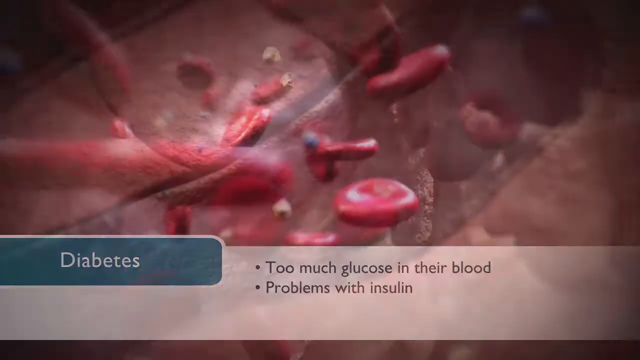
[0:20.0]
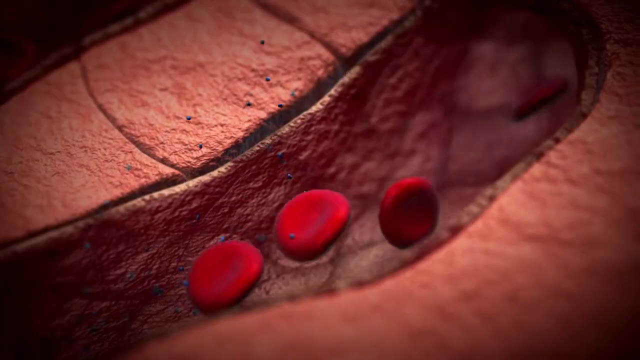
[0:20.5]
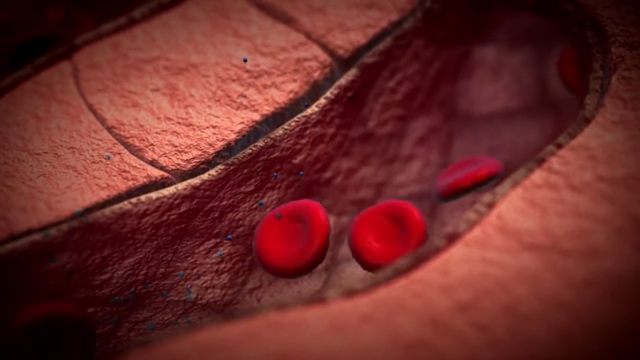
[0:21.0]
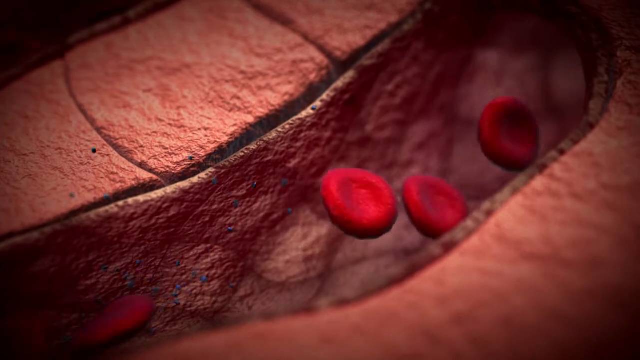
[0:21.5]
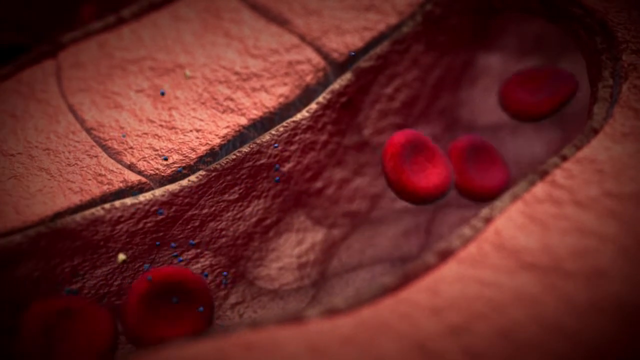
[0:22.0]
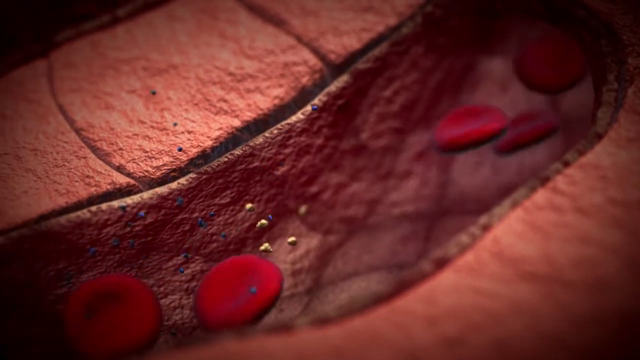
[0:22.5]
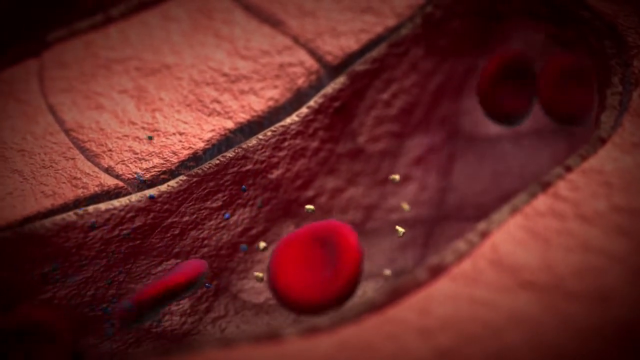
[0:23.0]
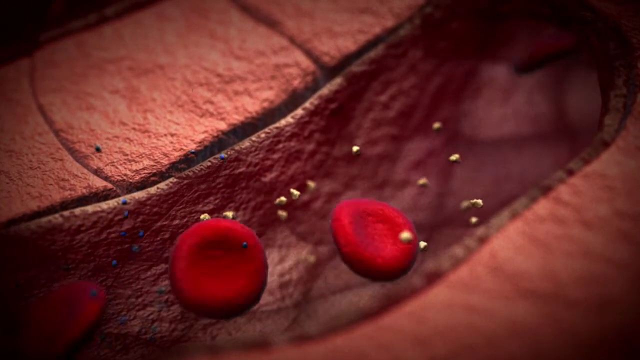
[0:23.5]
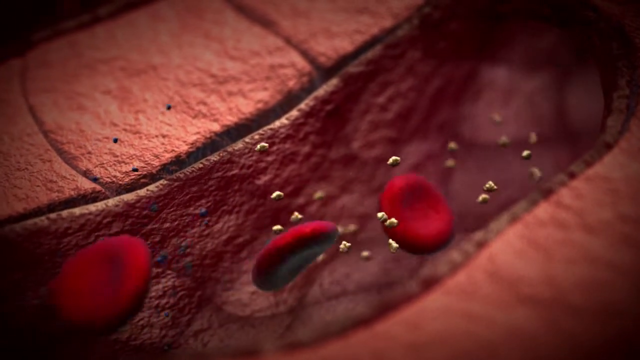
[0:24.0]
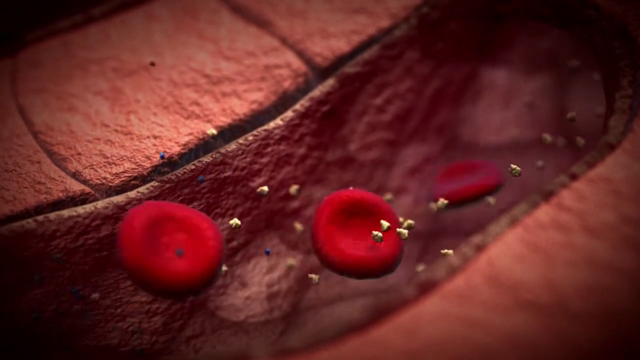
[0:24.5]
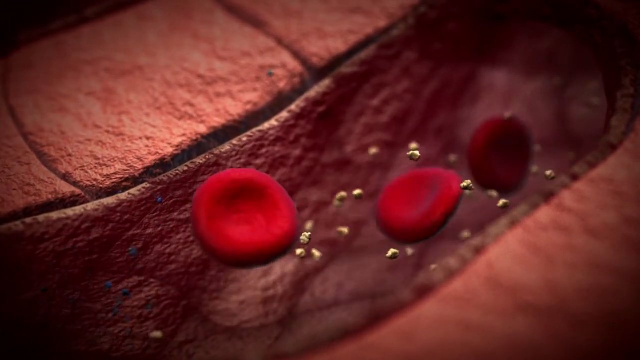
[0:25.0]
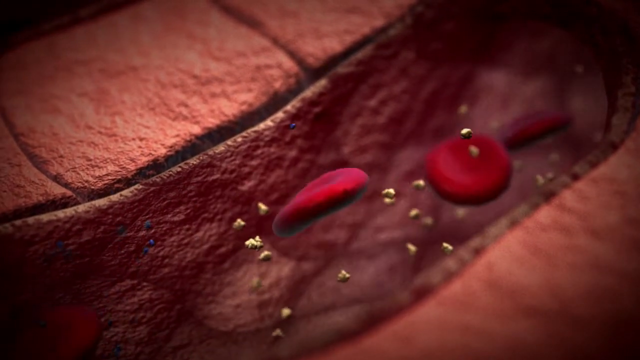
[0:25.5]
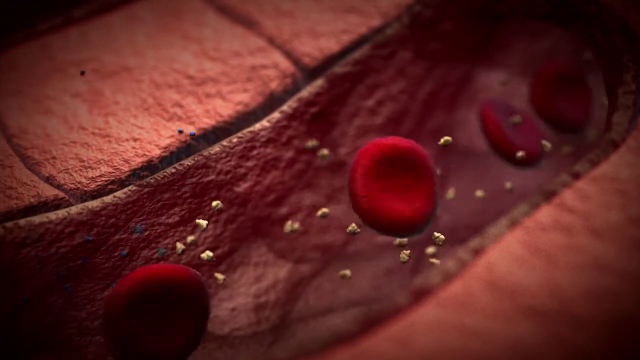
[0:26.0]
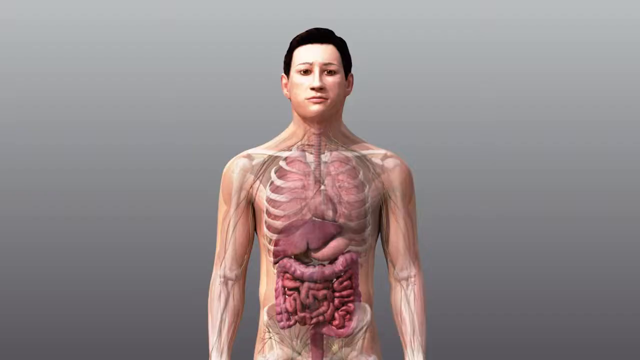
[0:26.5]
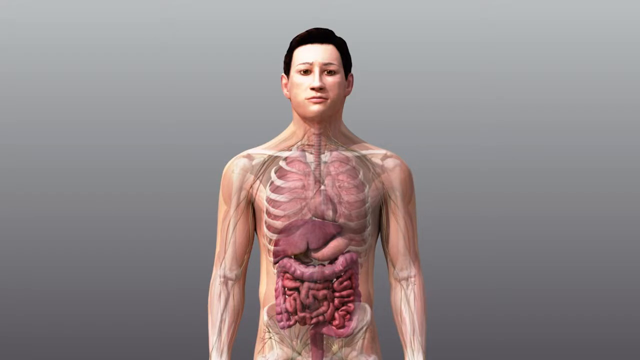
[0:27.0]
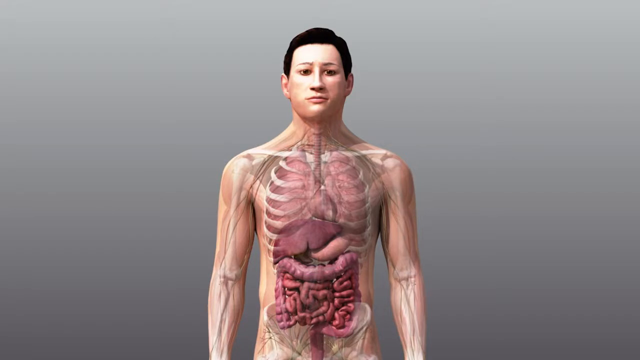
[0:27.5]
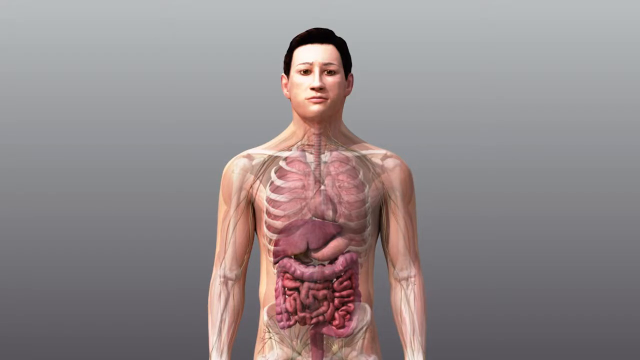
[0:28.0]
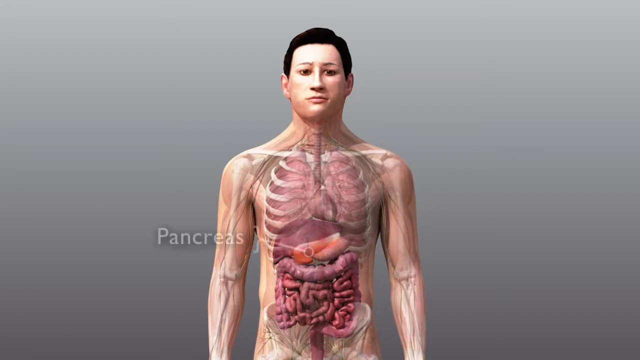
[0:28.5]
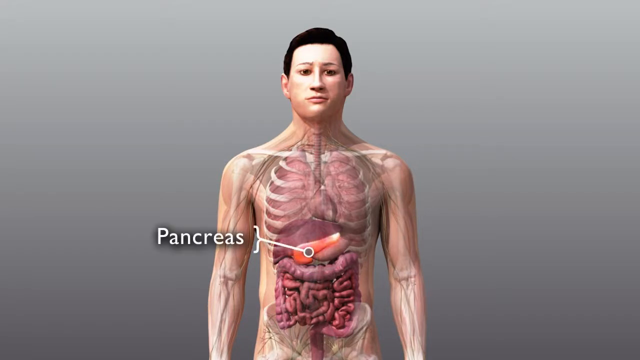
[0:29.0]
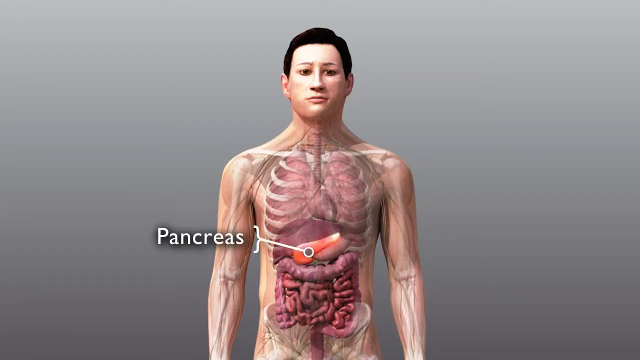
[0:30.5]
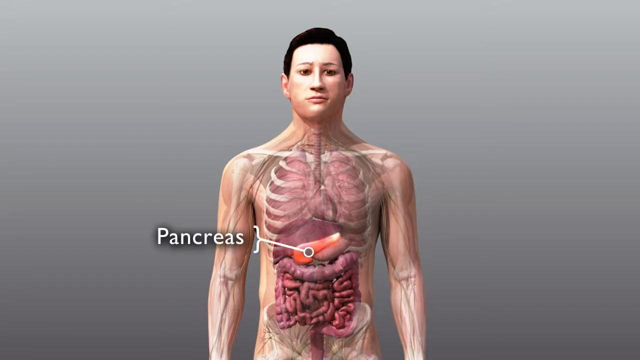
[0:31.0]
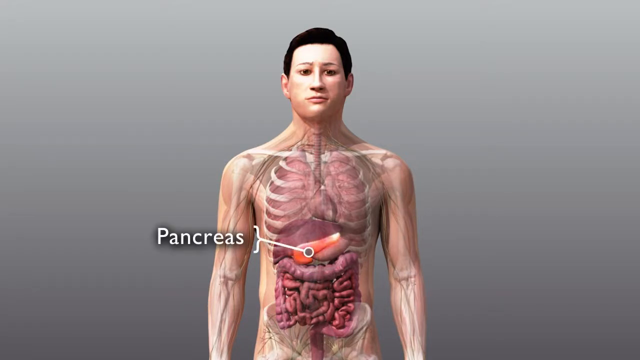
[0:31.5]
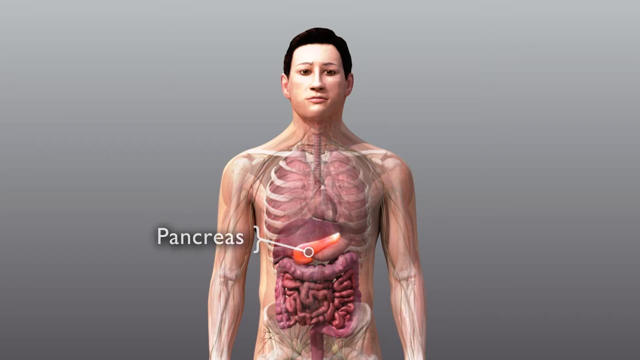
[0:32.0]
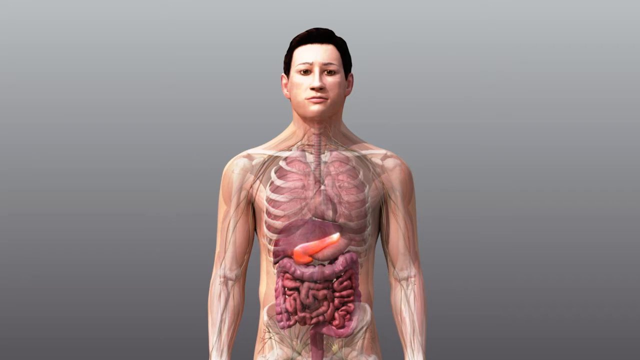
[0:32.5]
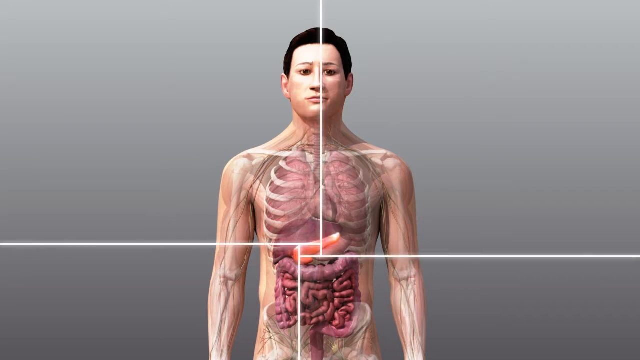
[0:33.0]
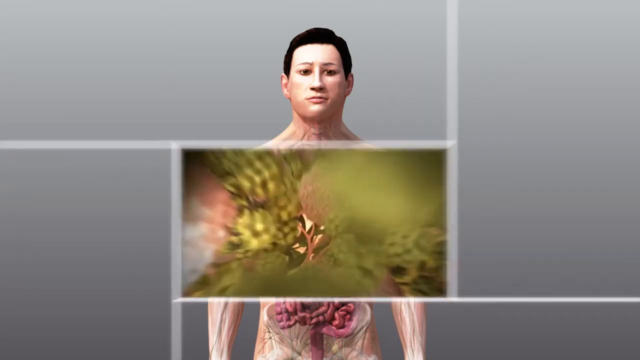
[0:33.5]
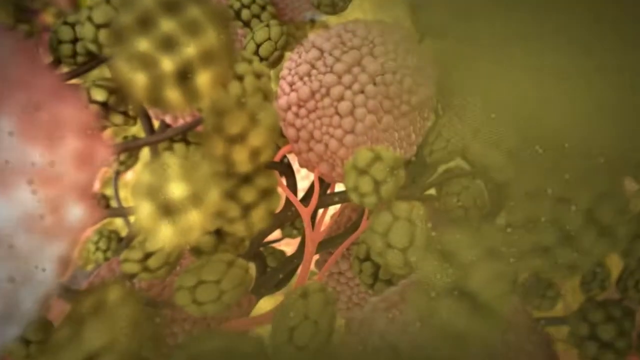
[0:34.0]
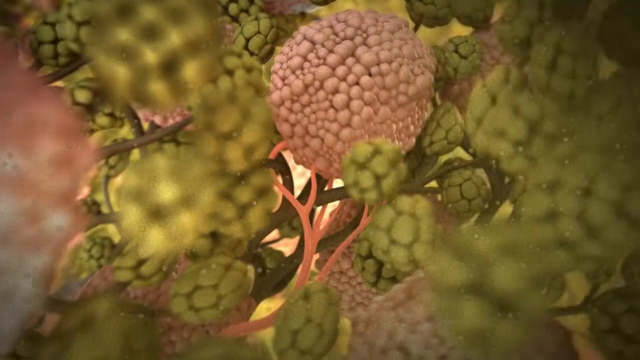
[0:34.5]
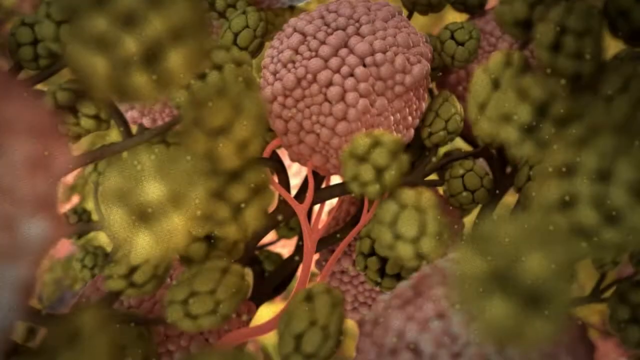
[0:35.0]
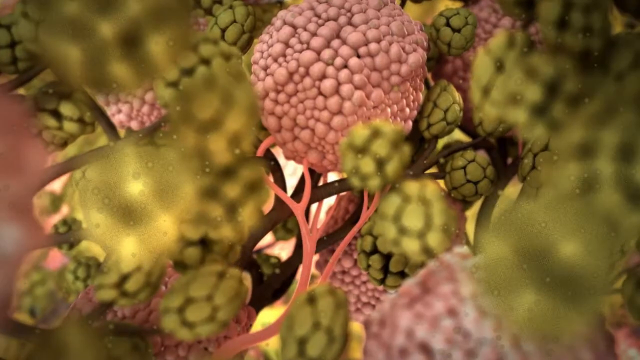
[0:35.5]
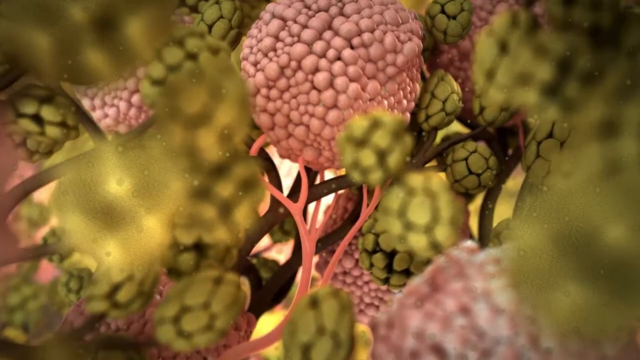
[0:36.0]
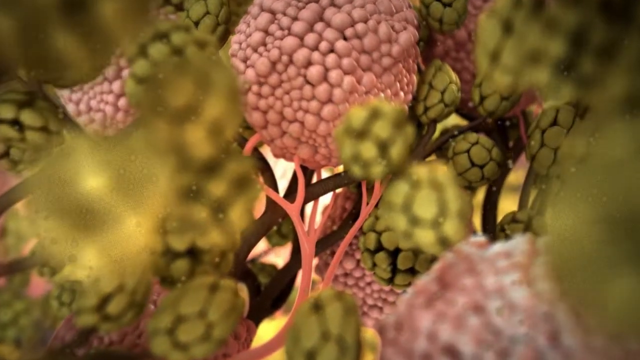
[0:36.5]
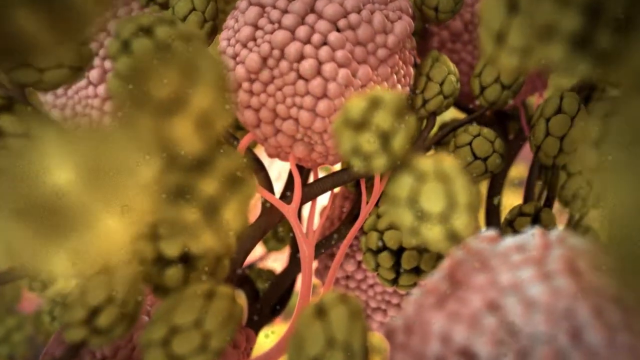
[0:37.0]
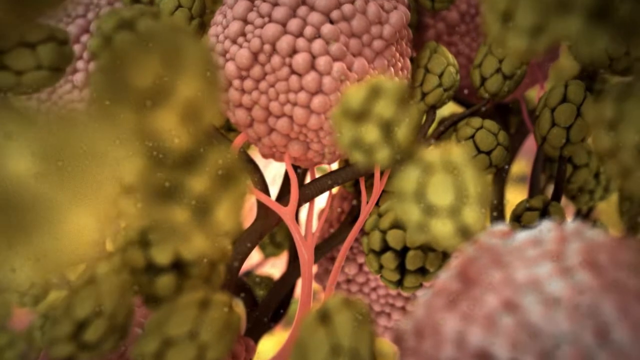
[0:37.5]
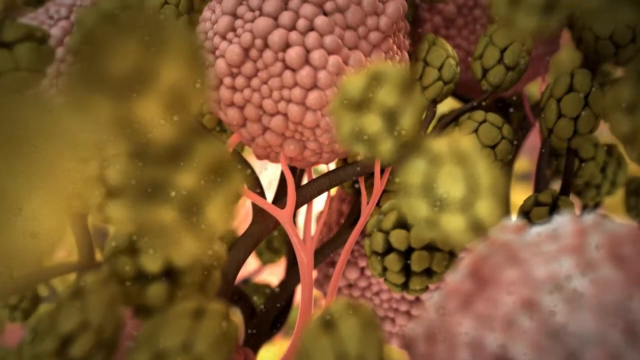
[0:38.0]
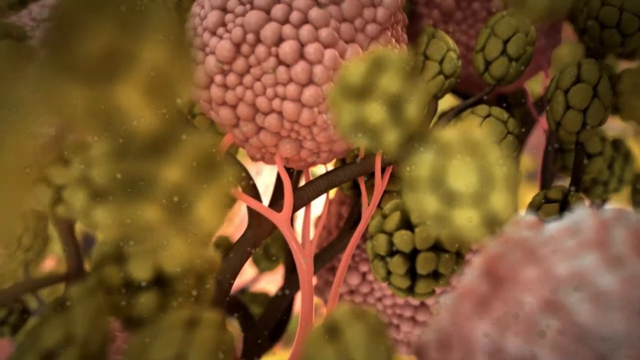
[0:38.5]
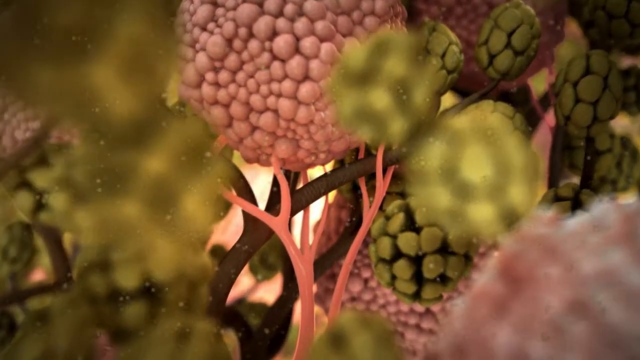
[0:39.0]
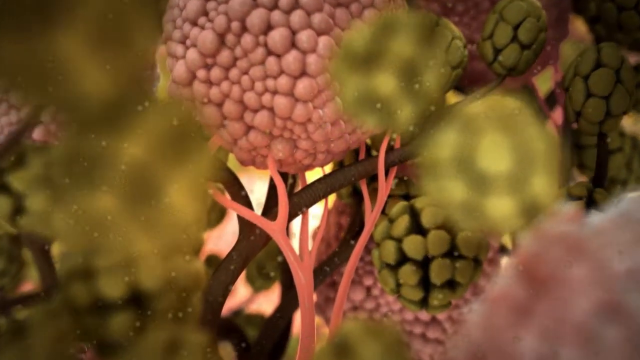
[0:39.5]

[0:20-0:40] Another digital animation appears that may show elements in the bloodstream inside human veins or arteries. Large, flat, round circles float from left to right through a channel that may represent a vein, with tiny blue and yellow spheres circulating among them. The next shot shows a diagram of a human body from the waist up: a man with short dark hair whose organs and skeleton are visible inside his body. The word "pancreas" appears over his left arm with an arrow pointing to that organ in the centre of his torso. Four white lines then extend from each of the four sides of the screen, creating a rectangle that rapidly becomes larger and fills the screen. It is a diagram or illustration of the pancreas, which looks like large grape-like clusters of pink and green cells connected by brown and pink lines.